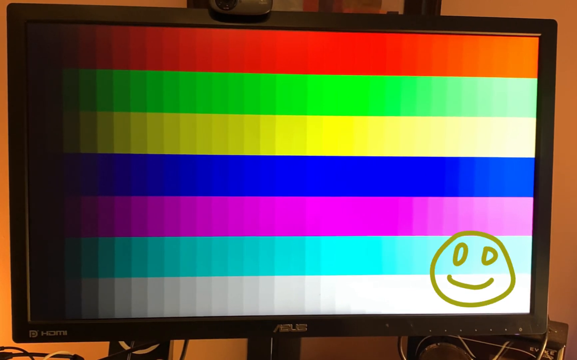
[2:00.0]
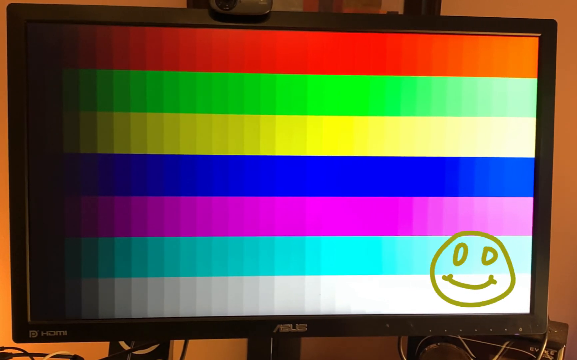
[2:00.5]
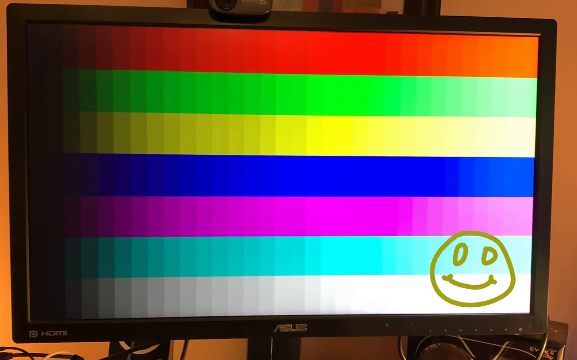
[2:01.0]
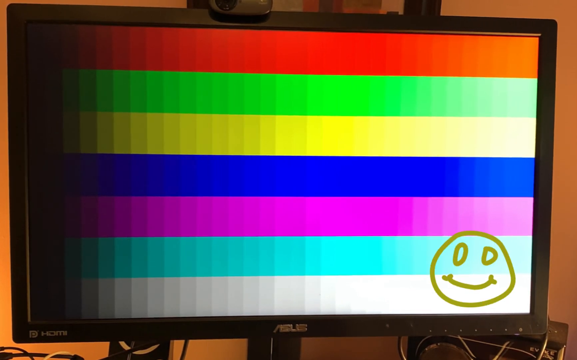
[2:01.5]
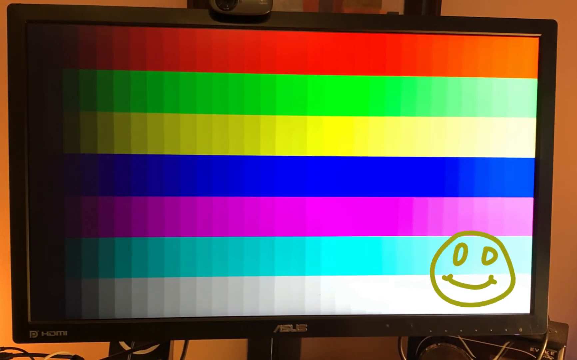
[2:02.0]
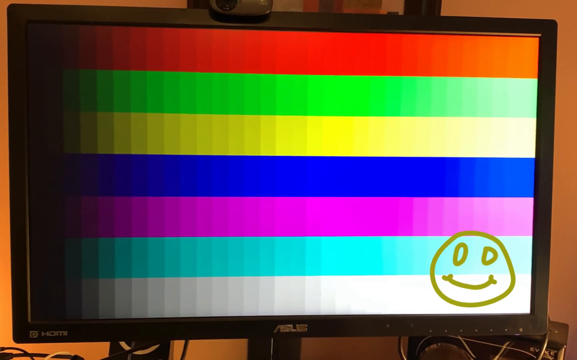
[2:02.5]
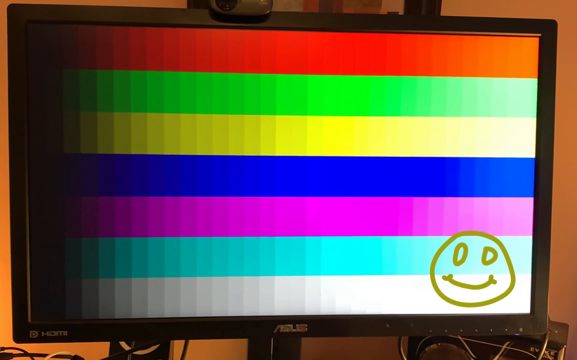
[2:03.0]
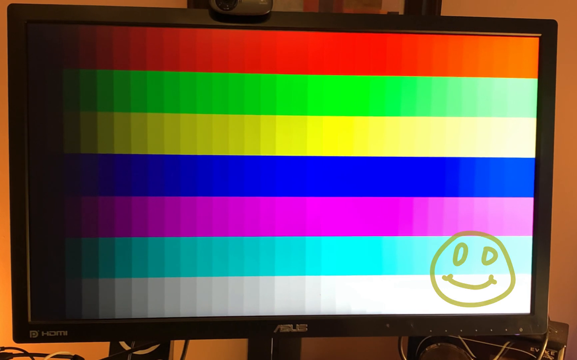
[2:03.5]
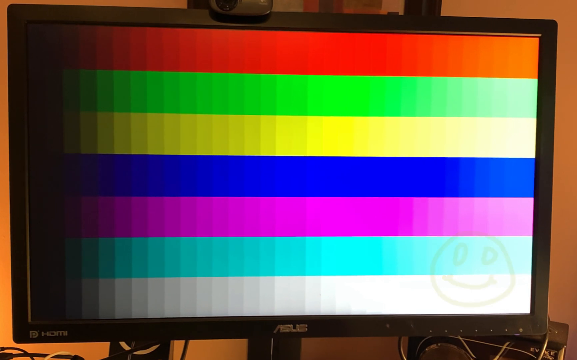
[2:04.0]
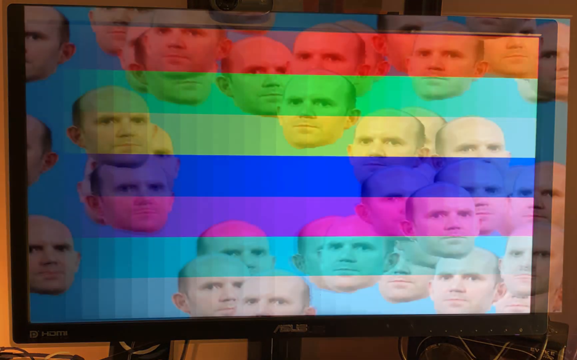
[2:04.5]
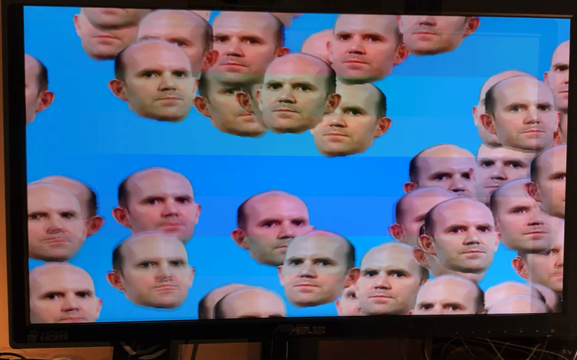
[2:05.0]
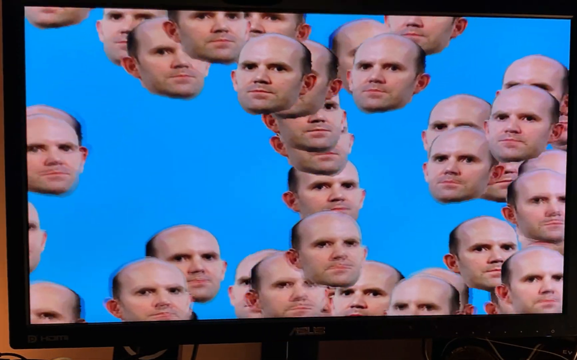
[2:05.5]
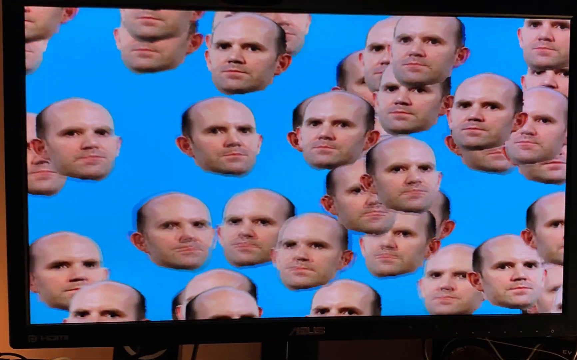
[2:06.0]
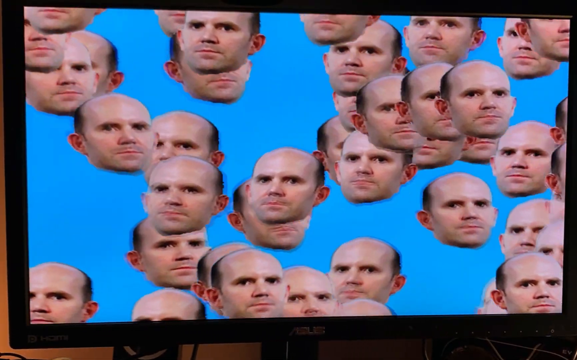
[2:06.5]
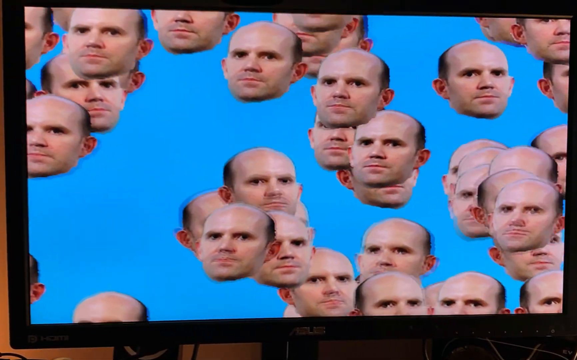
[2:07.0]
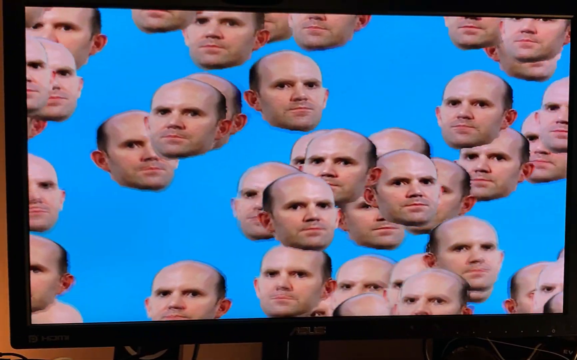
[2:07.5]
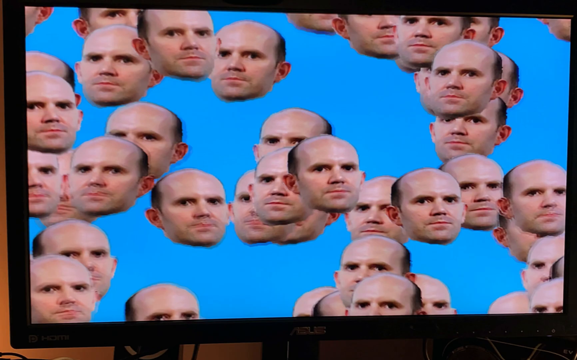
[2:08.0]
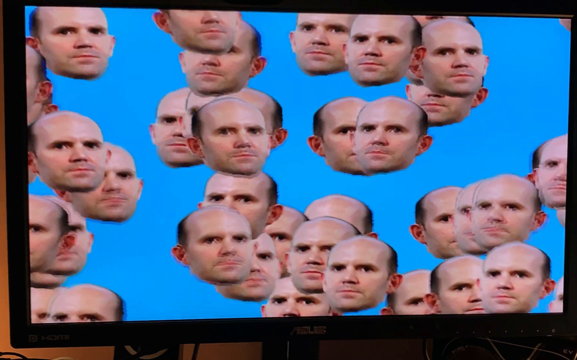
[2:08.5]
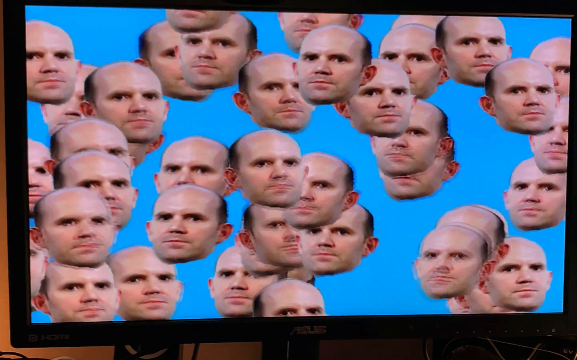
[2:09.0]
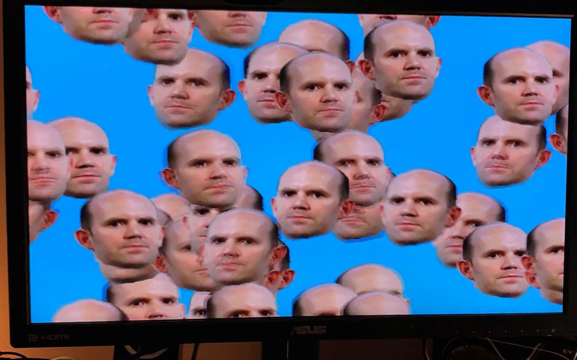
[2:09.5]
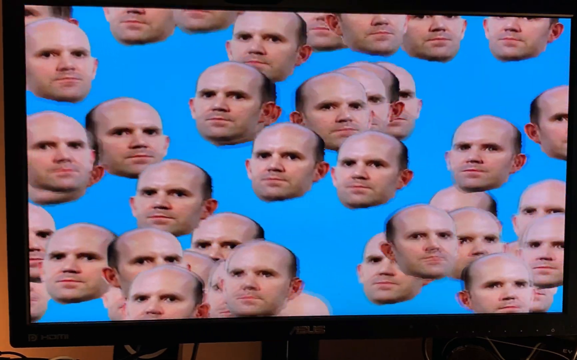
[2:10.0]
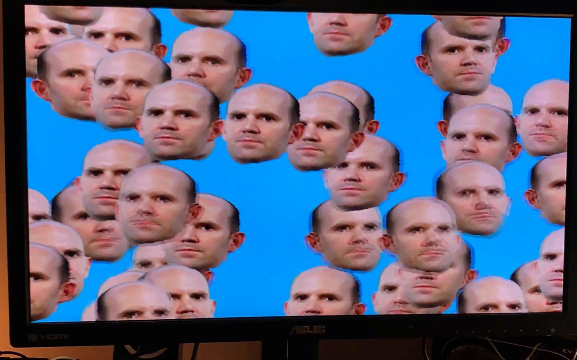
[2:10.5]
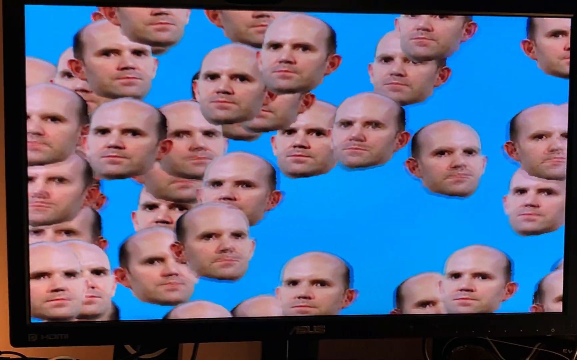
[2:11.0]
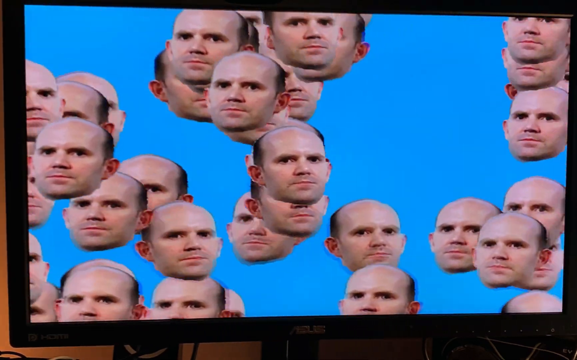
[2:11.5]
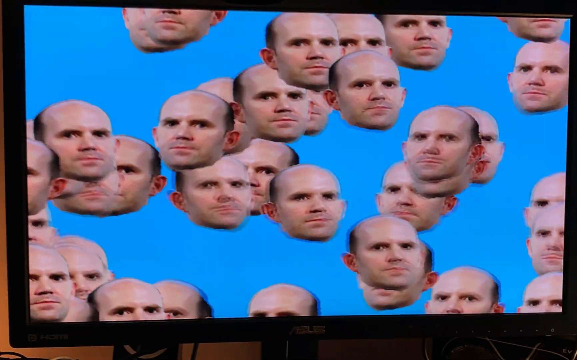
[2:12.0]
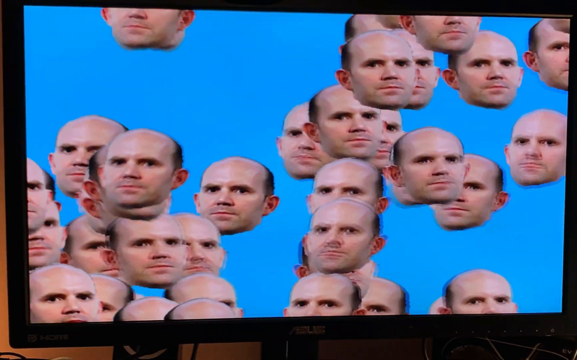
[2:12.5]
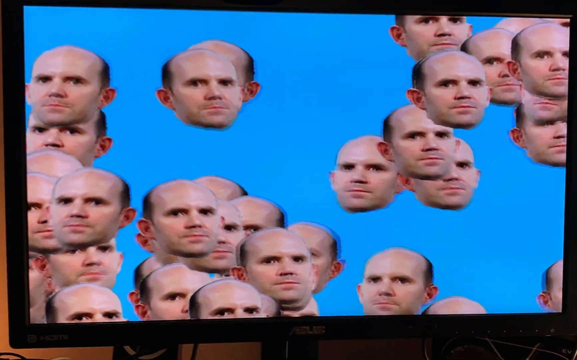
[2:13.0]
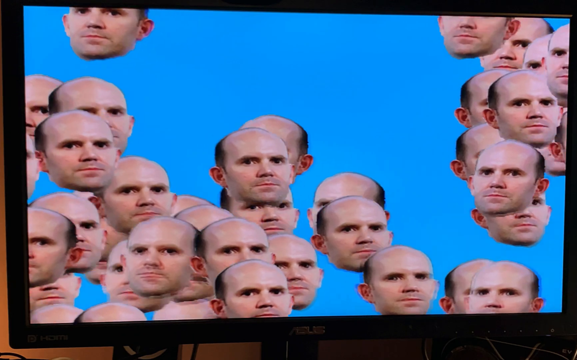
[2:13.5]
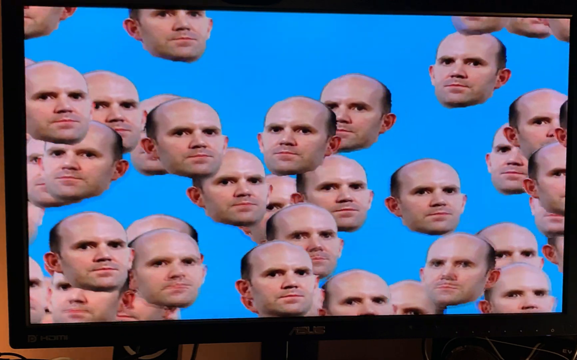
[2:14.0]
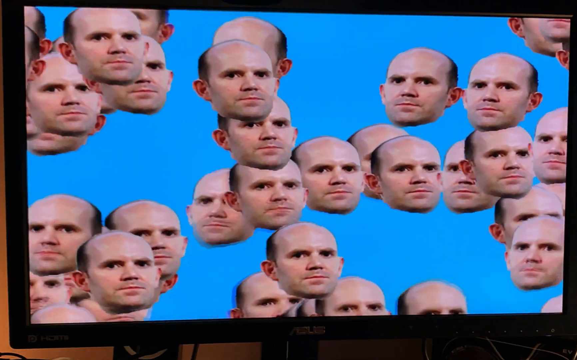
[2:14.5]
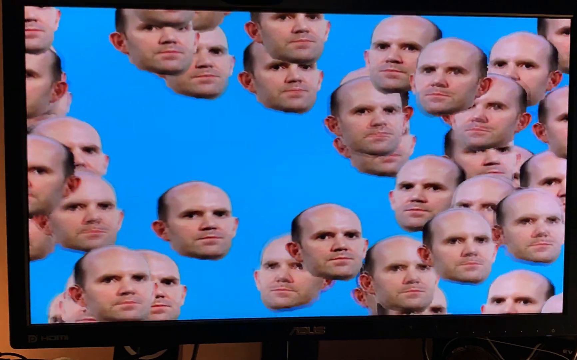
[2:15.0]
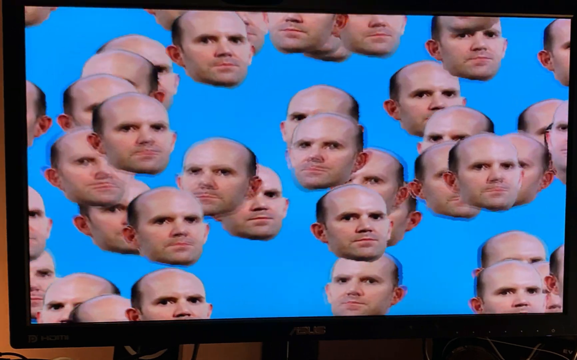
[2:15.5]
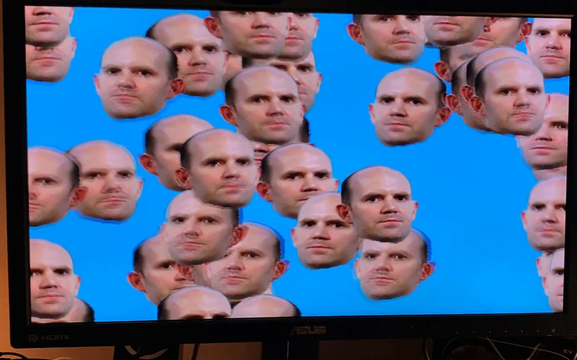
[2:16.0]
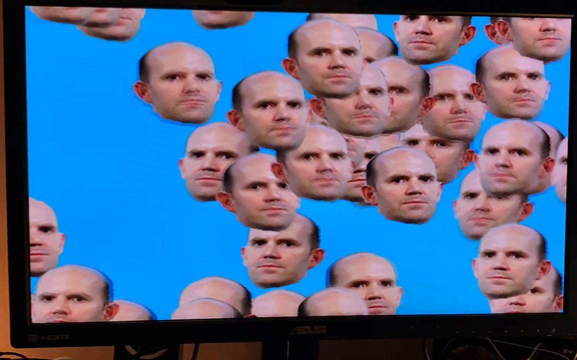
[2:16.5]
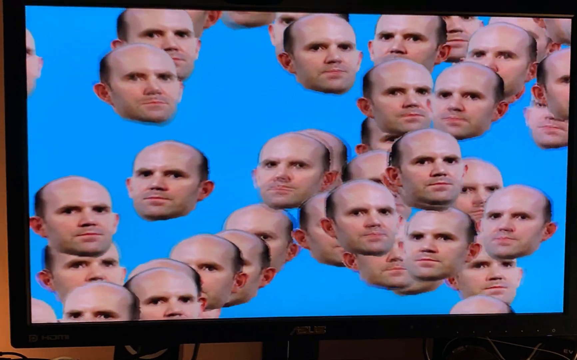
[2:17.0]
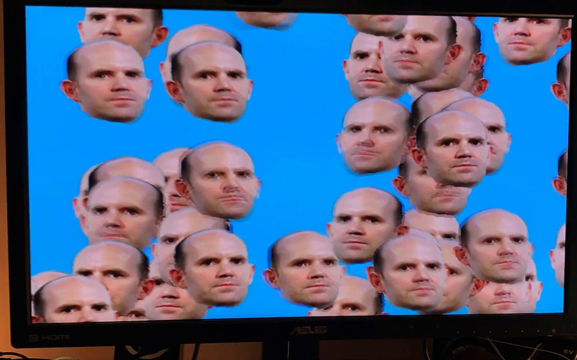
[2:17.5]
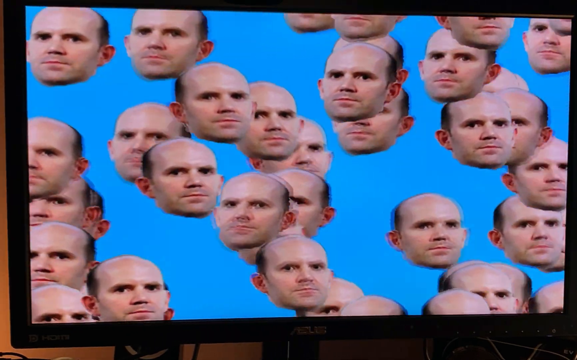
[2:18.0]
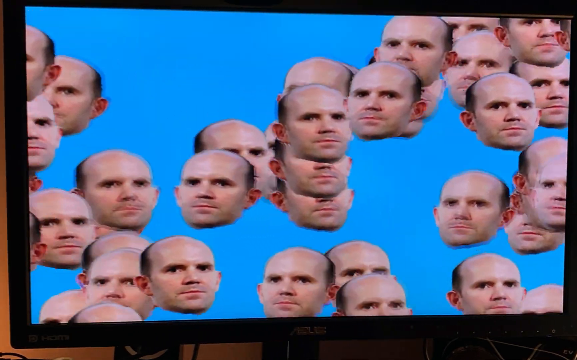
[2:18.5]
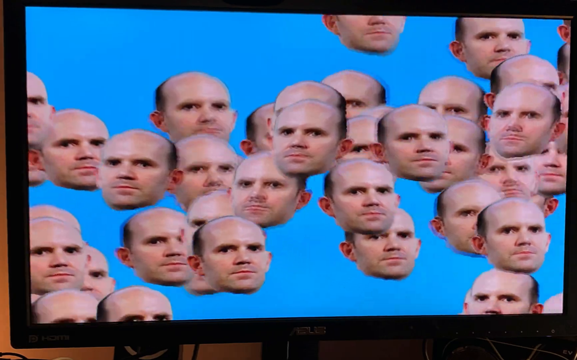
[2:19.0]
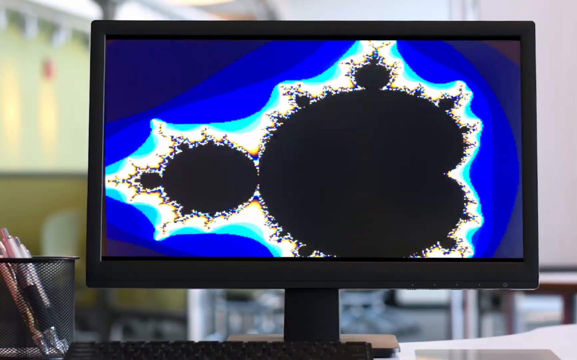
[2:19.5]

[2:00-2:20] A computer monitor shows seven horizontal layers of color: from the top, red, green, yellow, blue, lavender, baby blue, and white. They vary in intensity, intense and vibrant on the left and getting lighter toward the right. A drawn smiling face is at the bottom left. The video transitions to a blue screen with multiple swirling heads of the same man, moving around the screen like orbs without touching one another, in constant motion, and they appear to multiply as more enter the screen. The video then transitions to a computer monitor that the camera appears to pan close to; its screen shows what looks like a germ under a microscope, blown up.